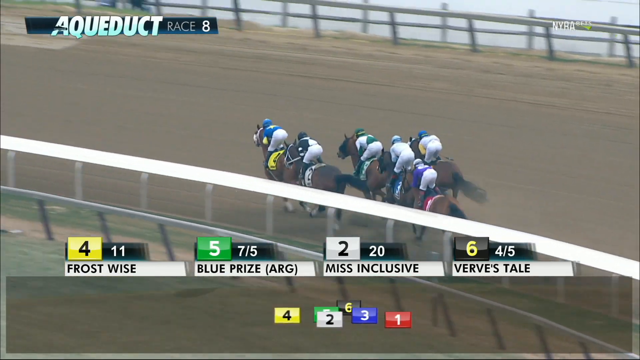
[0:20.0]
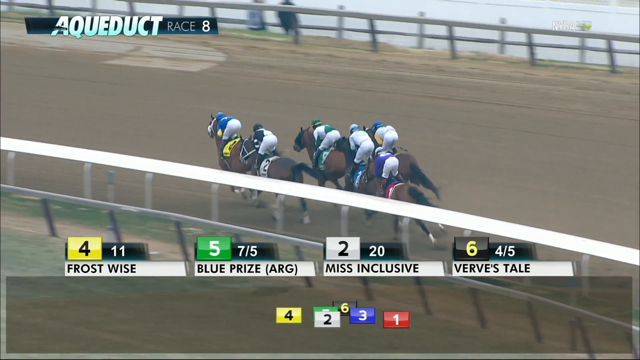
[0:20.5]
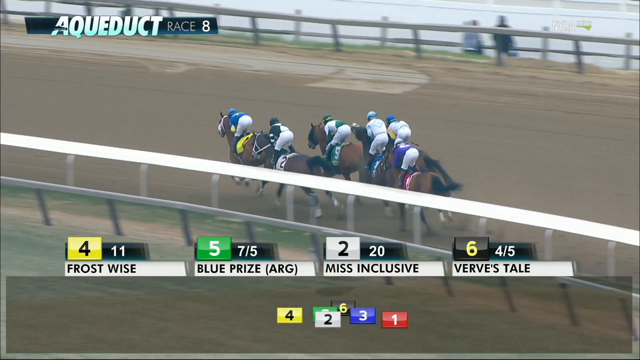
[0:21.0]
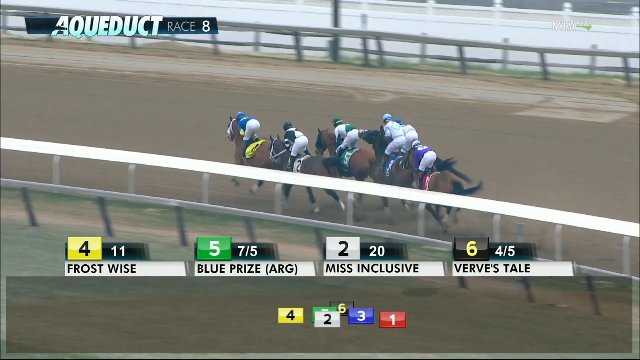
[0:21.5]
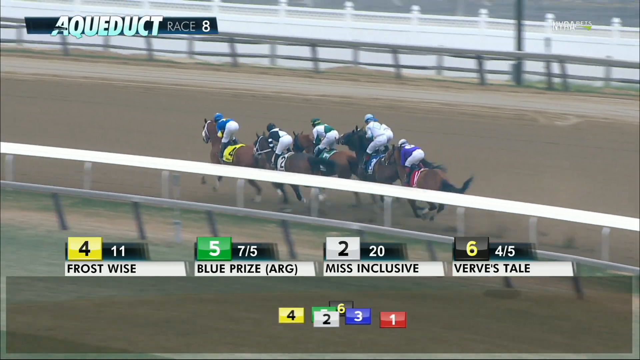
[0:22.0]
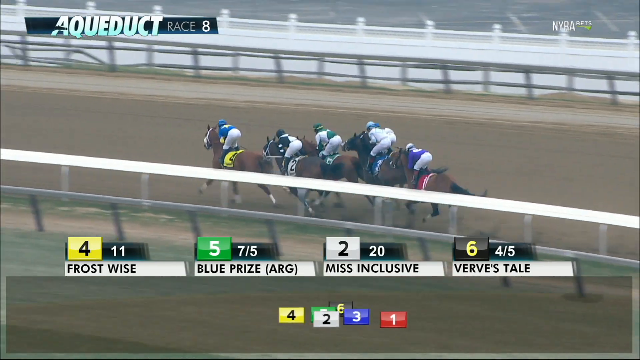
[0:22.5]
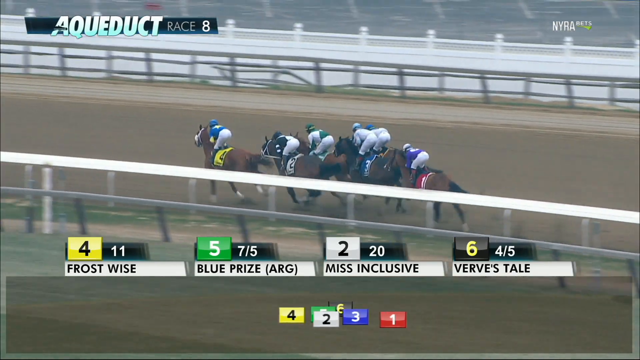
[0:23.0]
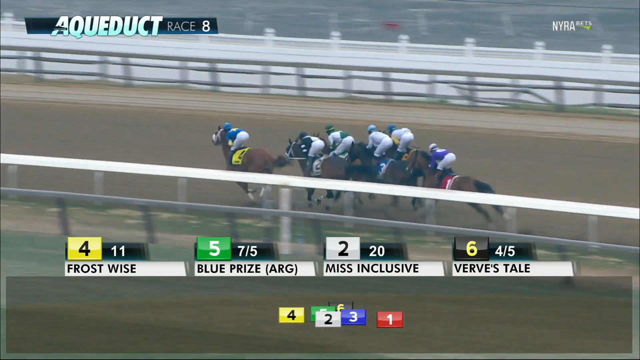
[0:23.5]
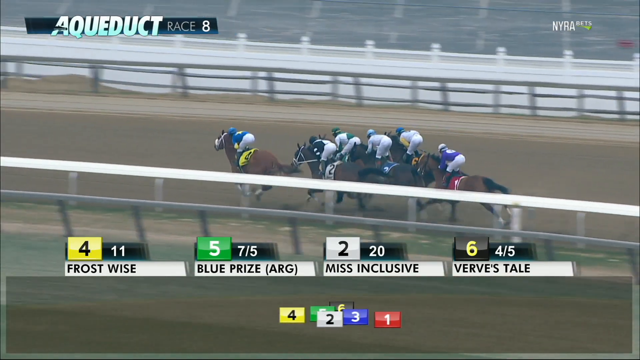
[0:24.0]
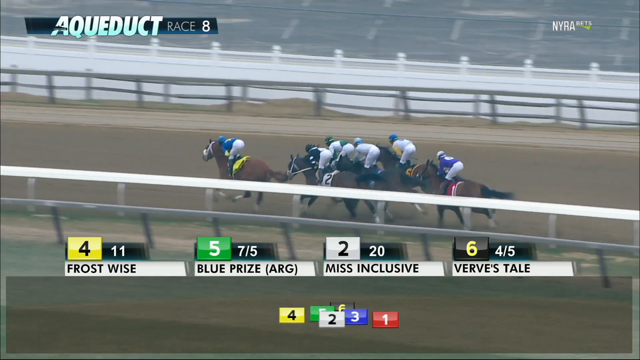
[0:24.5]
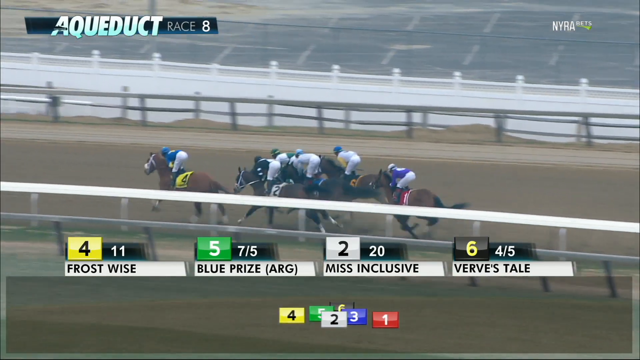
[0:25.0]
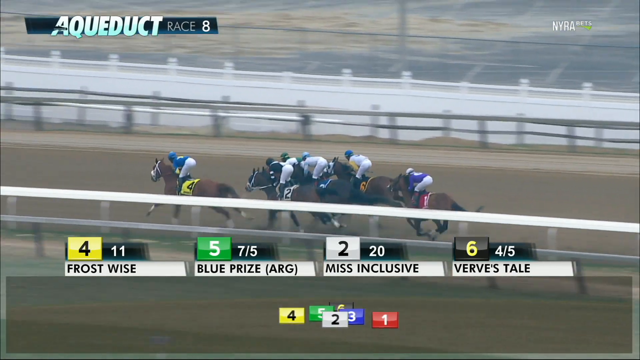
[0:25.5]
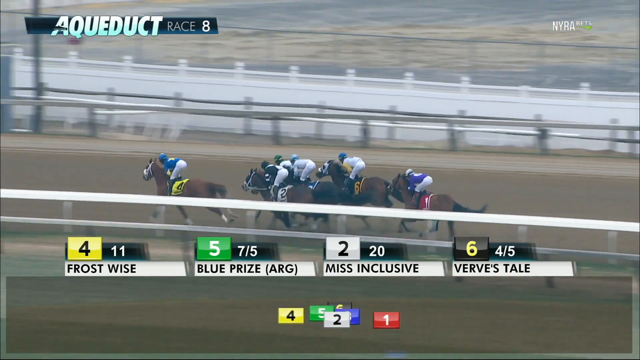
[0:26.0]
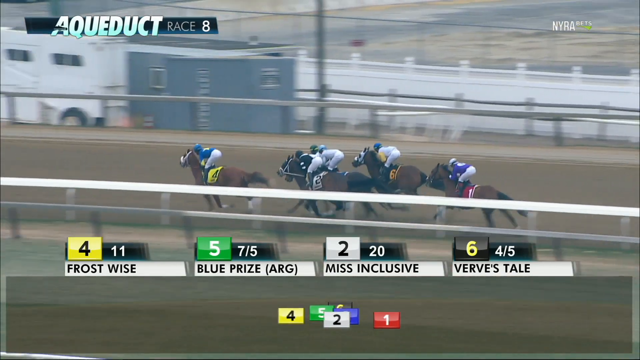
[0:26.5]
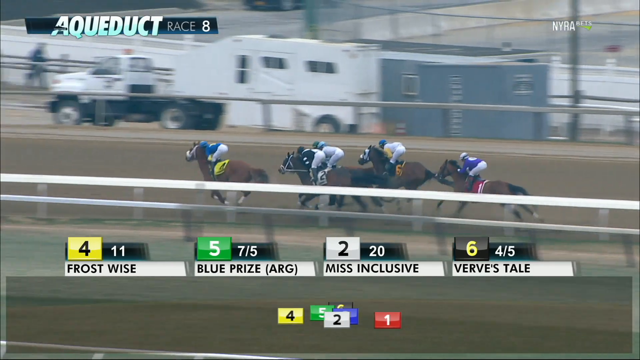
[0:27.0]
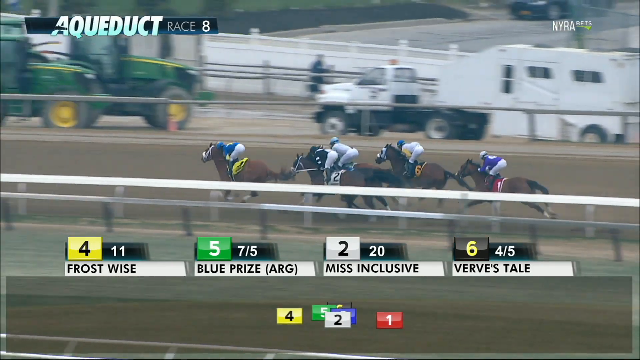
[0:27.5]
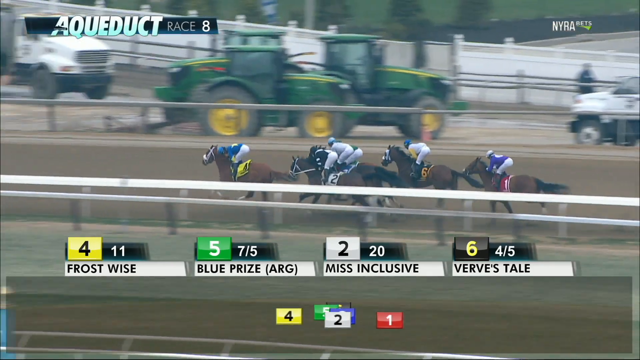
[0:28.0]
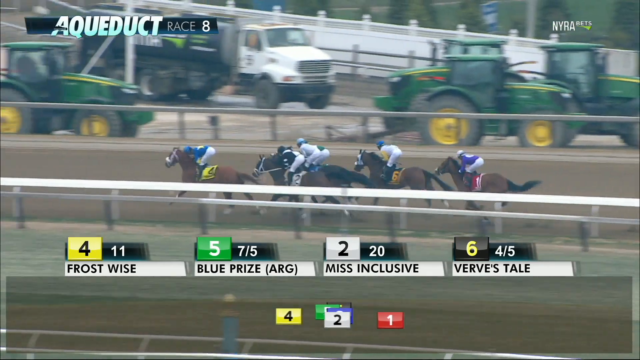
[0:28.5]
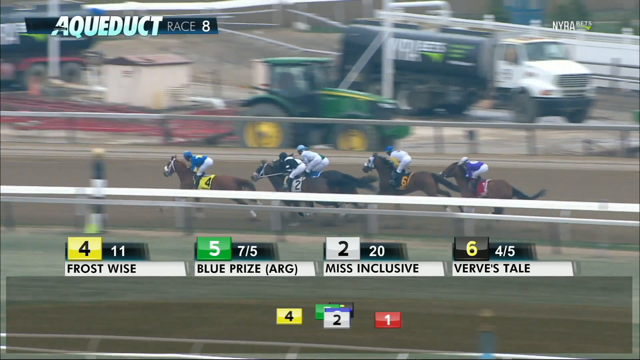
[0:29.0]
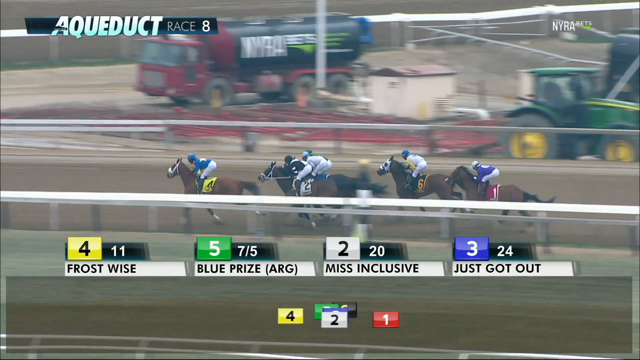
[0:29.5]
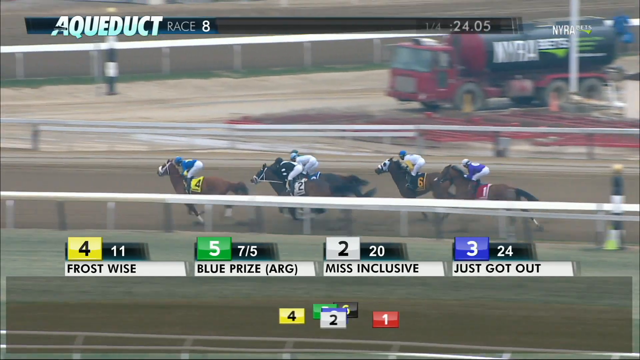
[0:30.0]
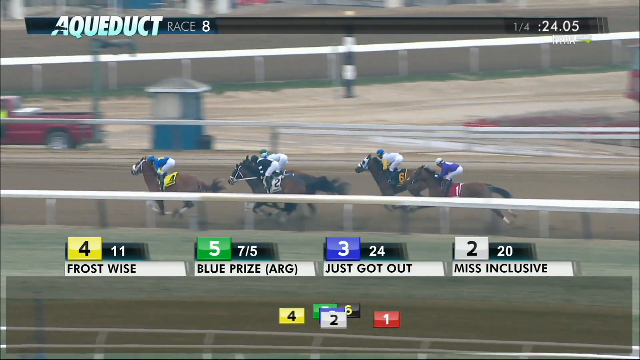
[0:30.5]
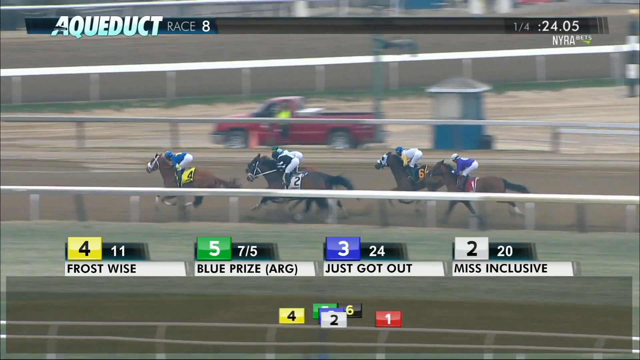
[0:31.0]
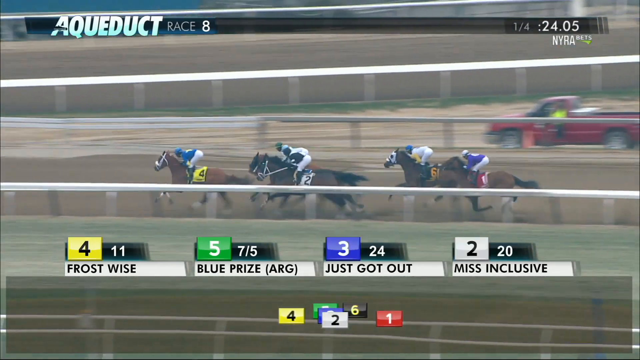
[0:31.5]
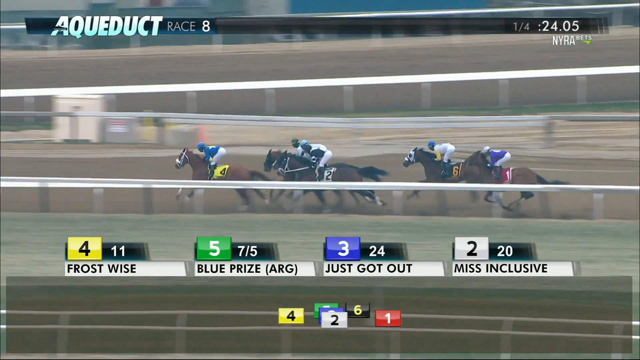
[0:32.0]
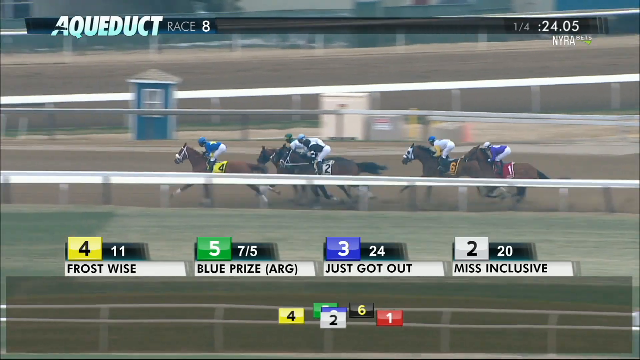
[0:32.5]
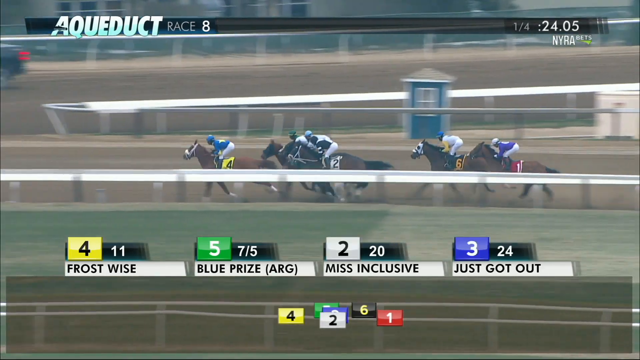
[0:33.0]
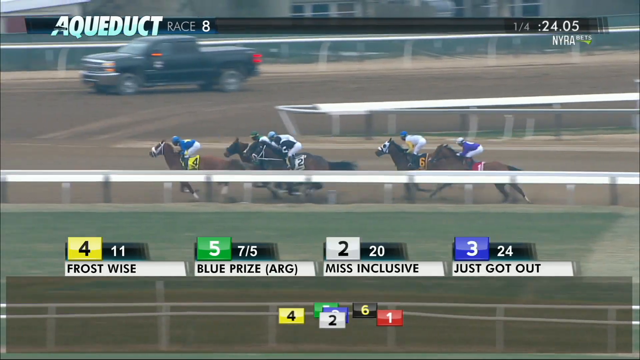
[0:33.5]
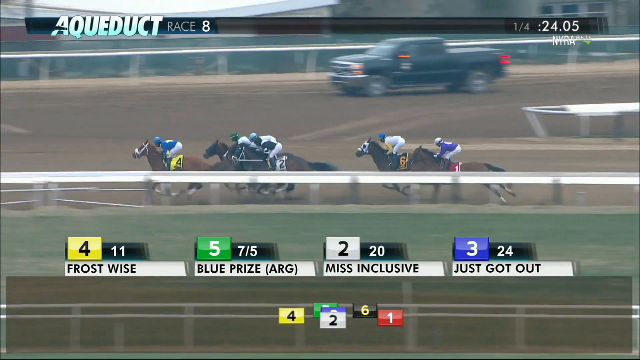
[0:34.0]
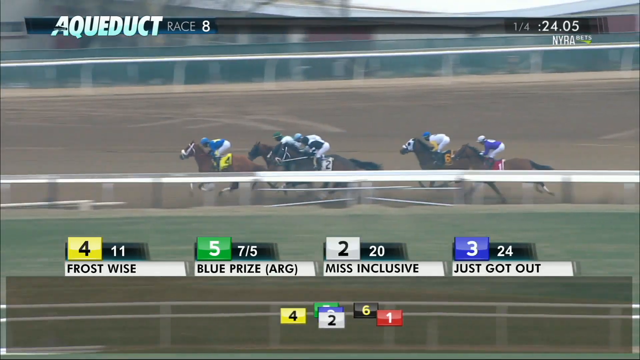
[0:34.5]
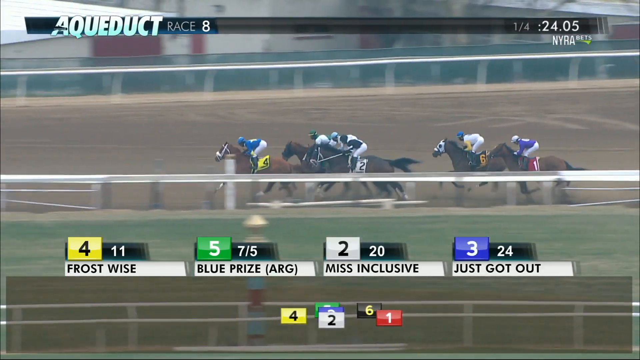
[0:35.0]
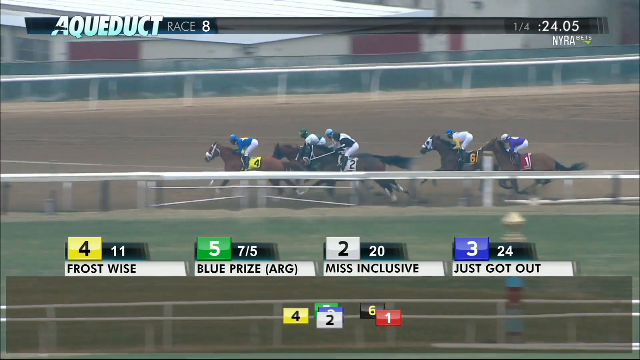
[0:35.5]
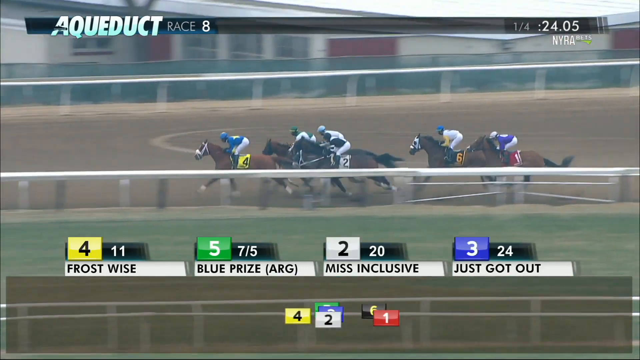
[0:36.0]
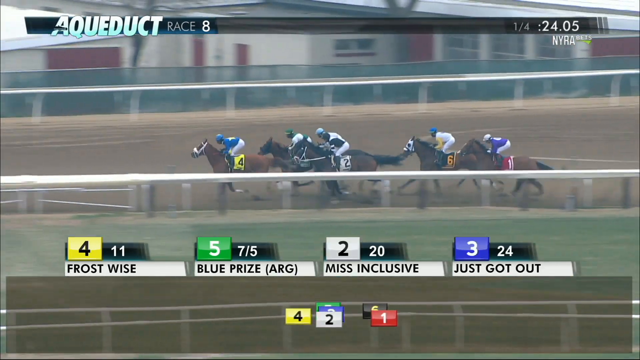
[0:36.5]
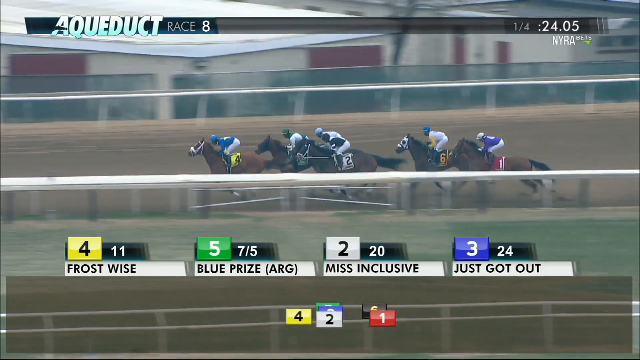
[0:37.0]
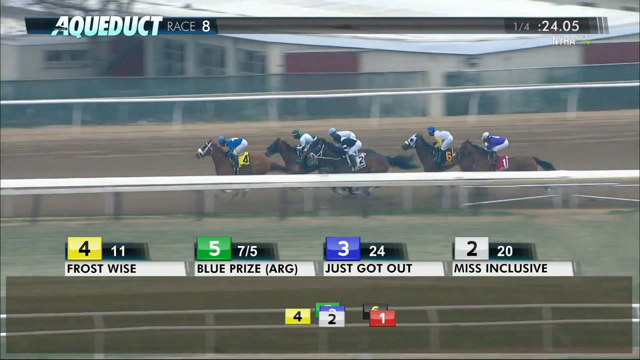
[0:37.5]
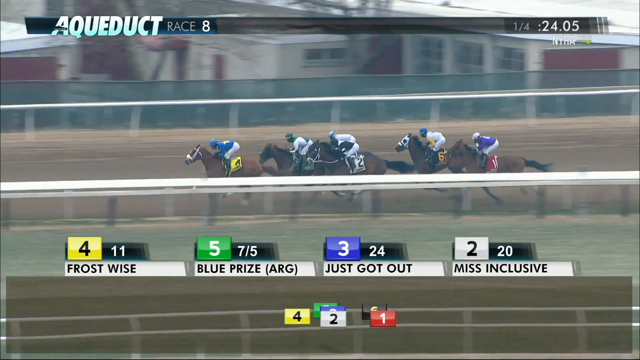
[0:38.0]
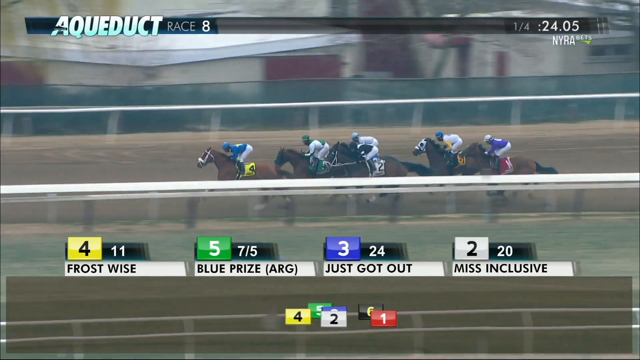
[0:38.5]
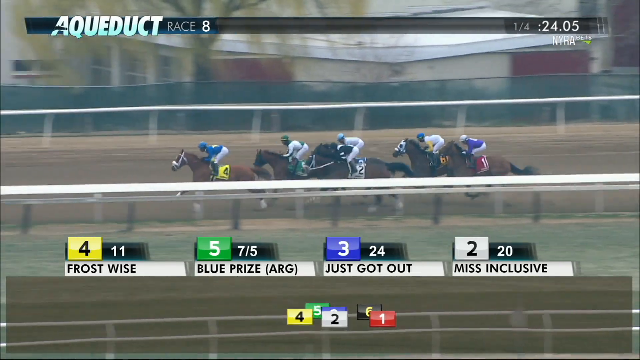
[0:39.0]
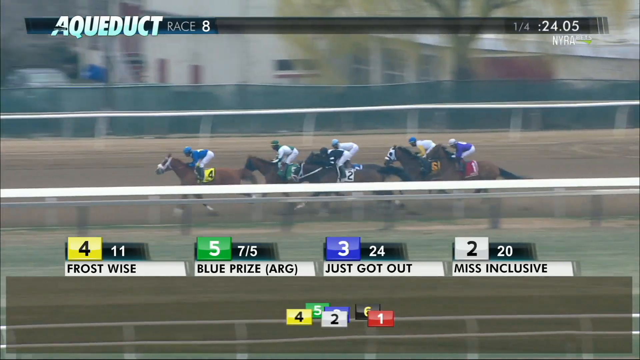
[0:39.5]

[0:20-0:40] The horses enter the first curve of the long track, which has a much more gentle curve. They run extremely fast in the same order, becoming a little more spaced out after having been clumped together. One horse is clearly in front by a whole horse length, second and third are pretty close, fourth is right on their heels, and fifth is falling back a little on the inside. One horse in about second or third place looks kind of trapped on the inside. Frost Wise is still leading, Blue Prize is second, Miss Inclusive is third, and Just Got Out overtakes fourth place. Then Just Got Out moves into third and Miss Inclusive falls back to fourth, before it switches back to Miss Inclusive third and Just Got Out fourth. Mostly dirt is visible; no stands appear in the background, but there are some tractors and trailers, probably for grooming the track.